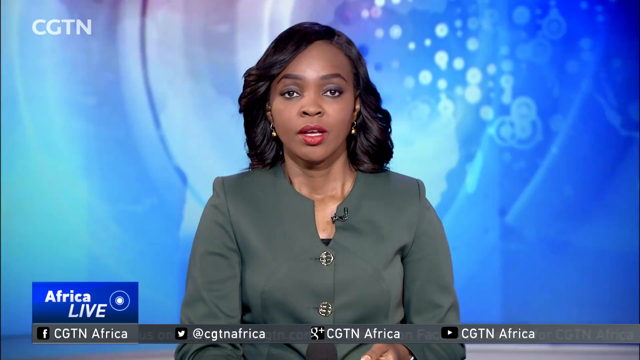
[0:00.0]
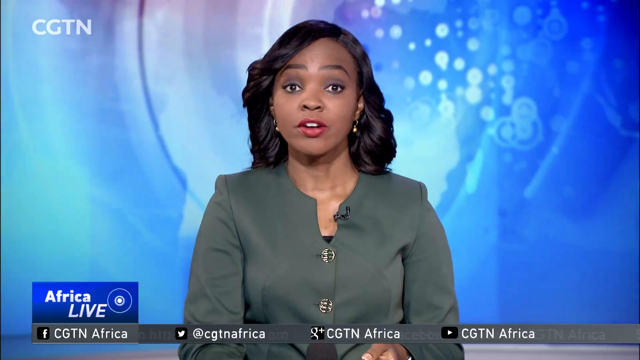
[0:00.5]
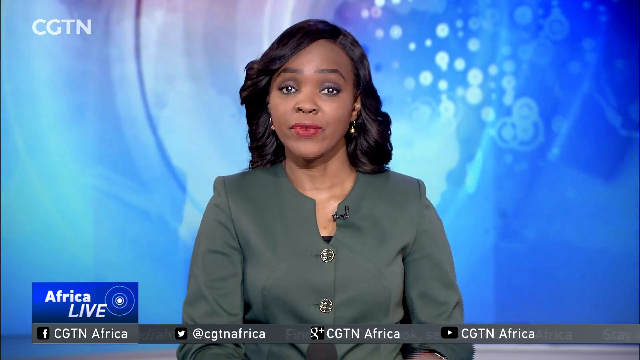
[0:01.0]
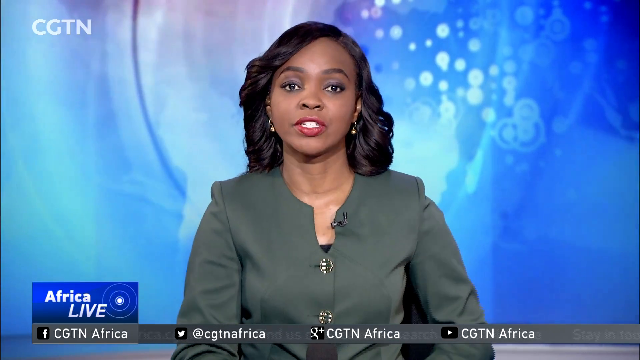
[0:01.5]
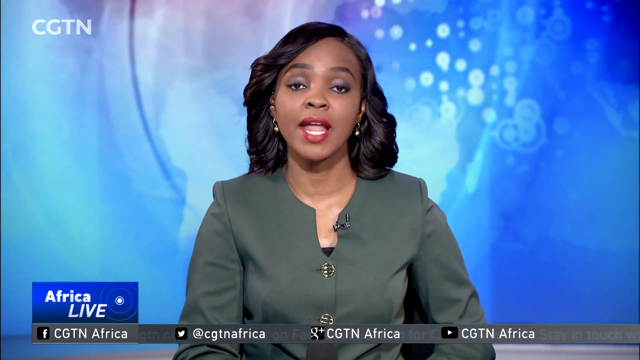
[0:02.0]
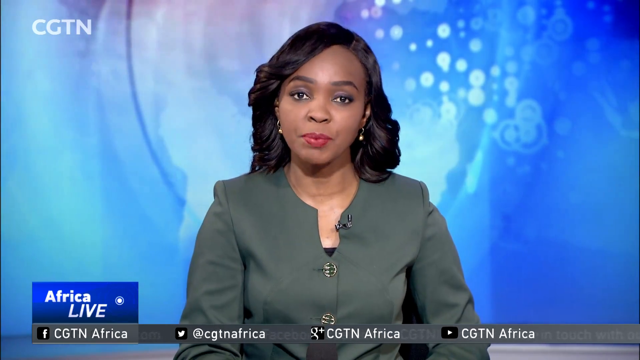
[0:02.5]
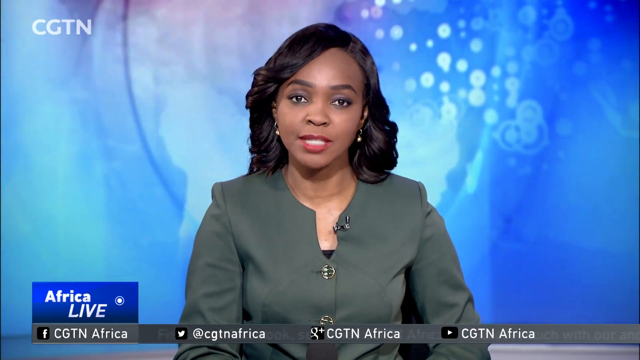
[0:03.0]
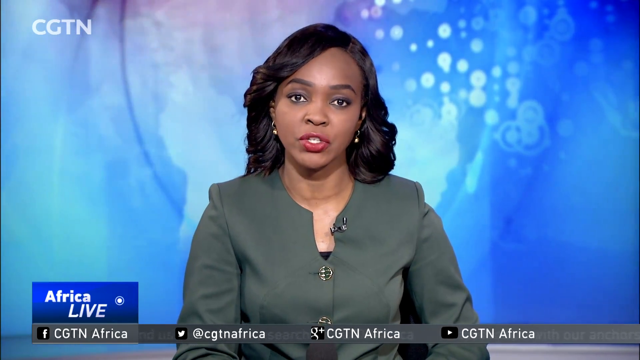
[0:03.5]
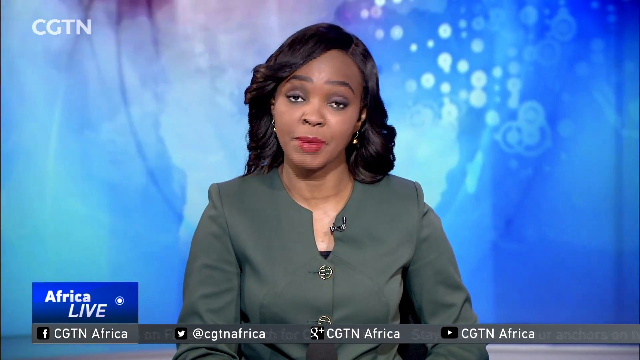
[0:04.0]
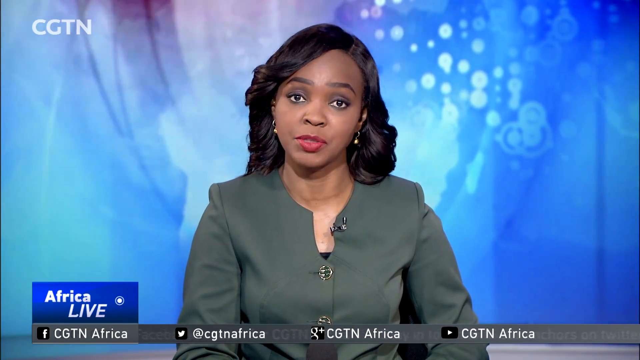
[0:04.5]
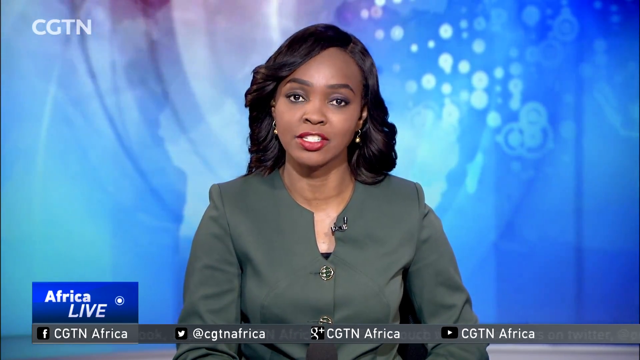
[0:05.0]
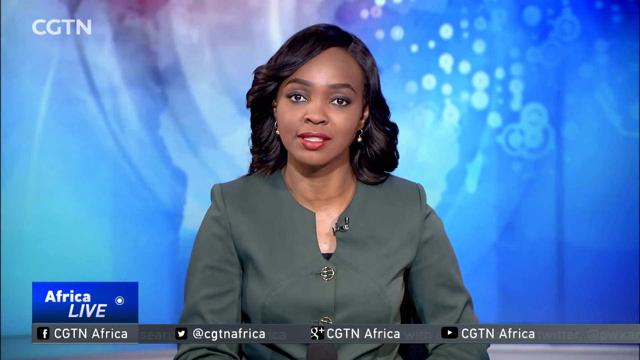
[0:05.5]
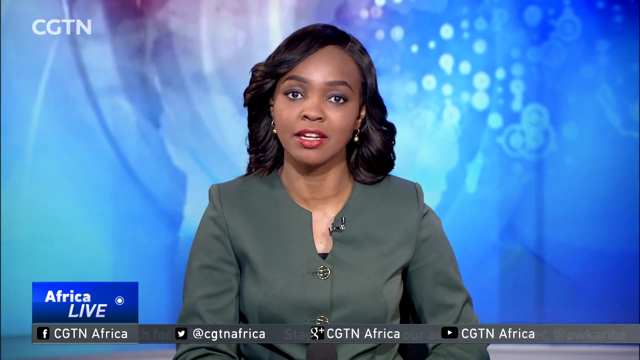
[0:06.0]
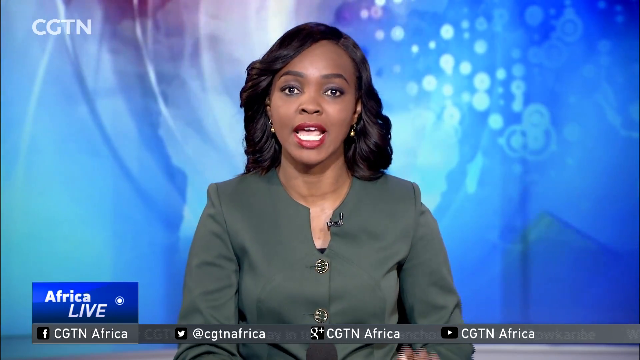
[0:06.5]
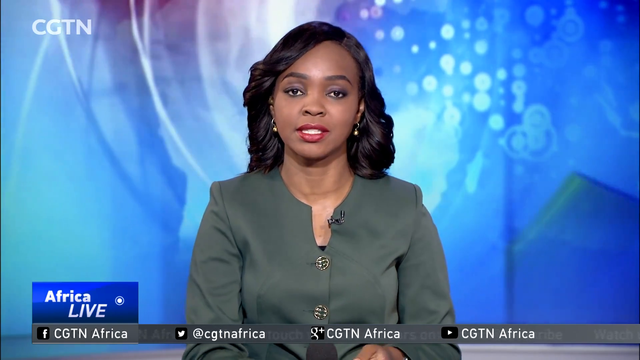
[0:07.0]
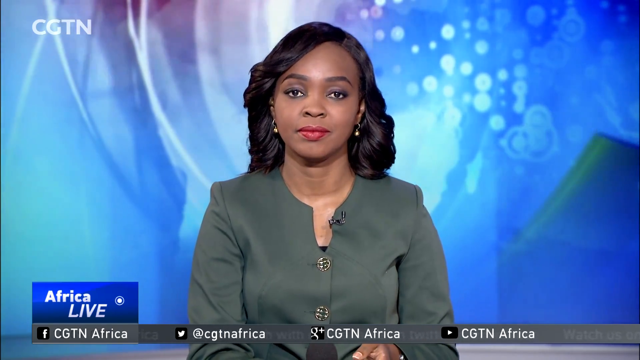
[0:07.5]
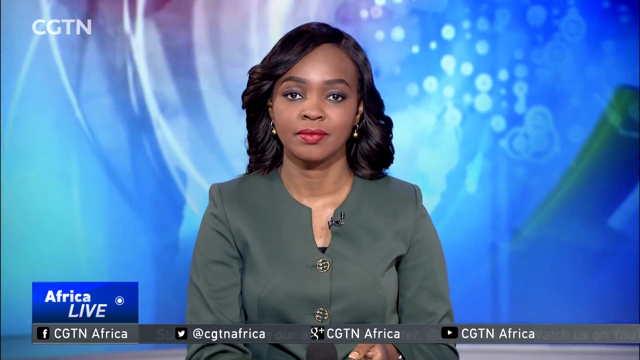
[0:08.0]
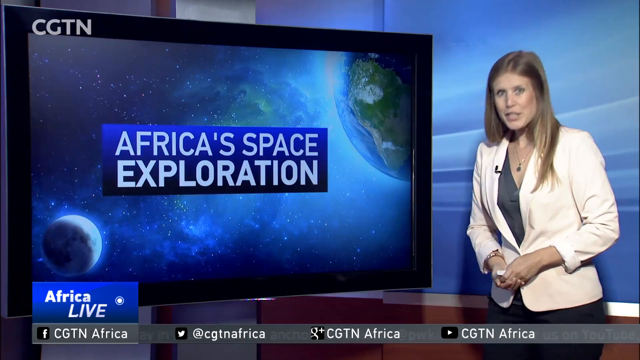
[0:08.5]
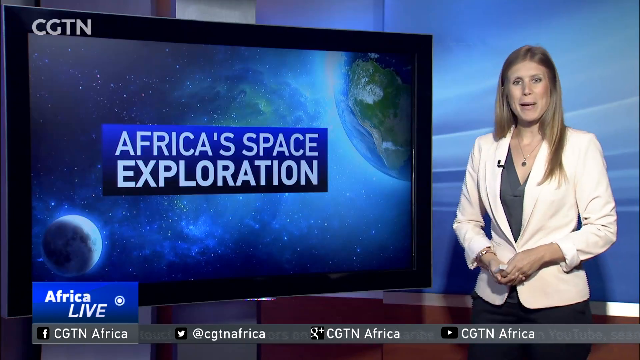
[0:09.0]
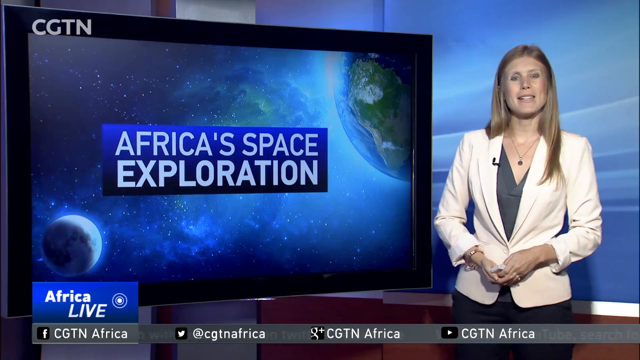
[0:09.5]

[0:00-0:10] The bottom left-hand corner of the screen reads "Africa Live." An anchor sits at a desk with a CGTN TV in the background, which shows bright shades of blue and purple along with other lighter colors. She is a woman with dark hair, earrings, red lipstick, and a blue outfit with large buttons down the front of her shirt, and she continues to talk as the newscast is presented. The broadcast then goes over to another woman, and "Africa Space Station Exploration" appears alongside an image of a TV.